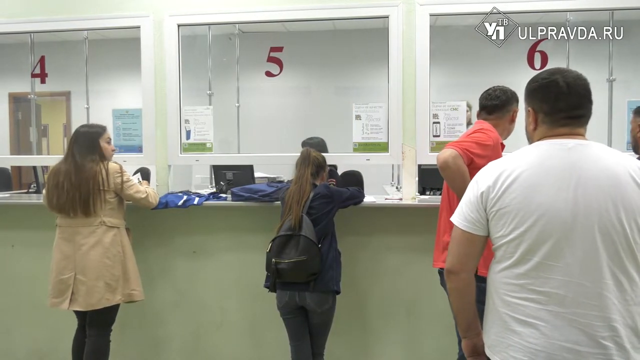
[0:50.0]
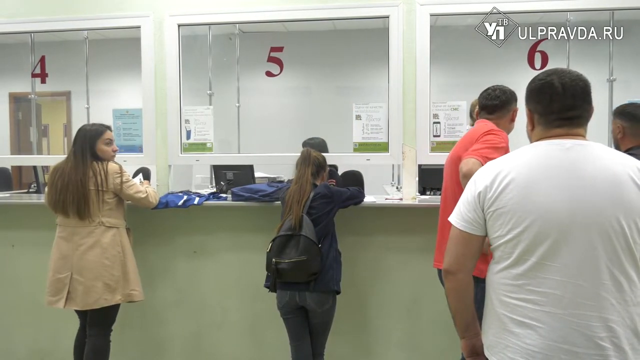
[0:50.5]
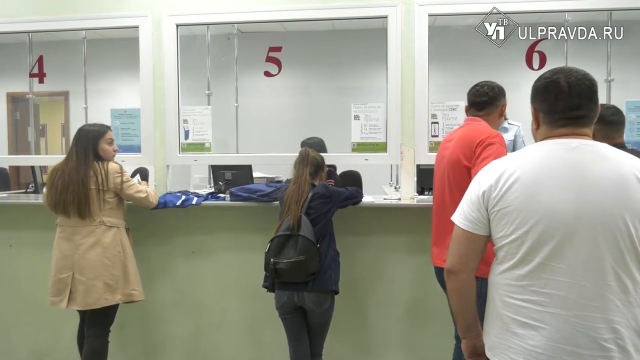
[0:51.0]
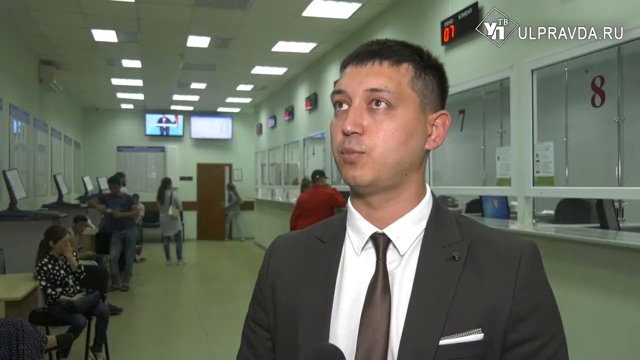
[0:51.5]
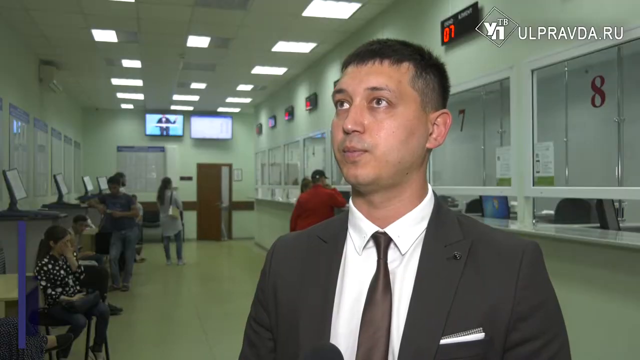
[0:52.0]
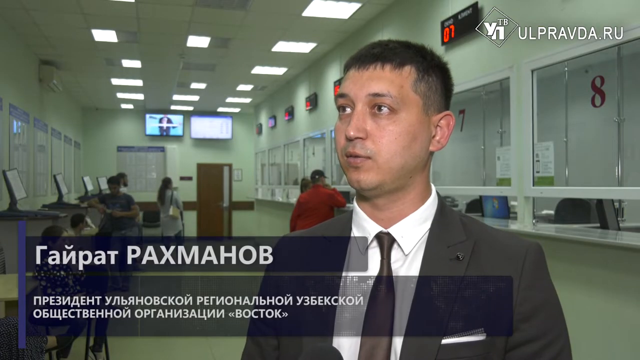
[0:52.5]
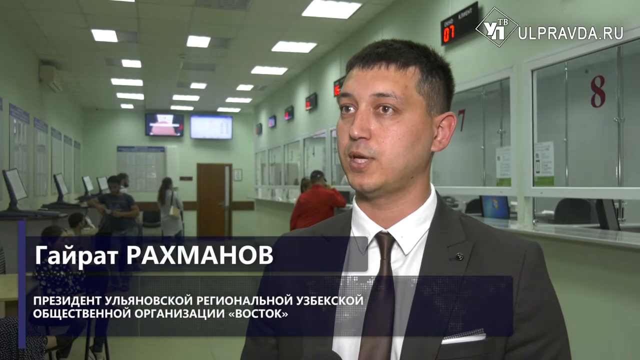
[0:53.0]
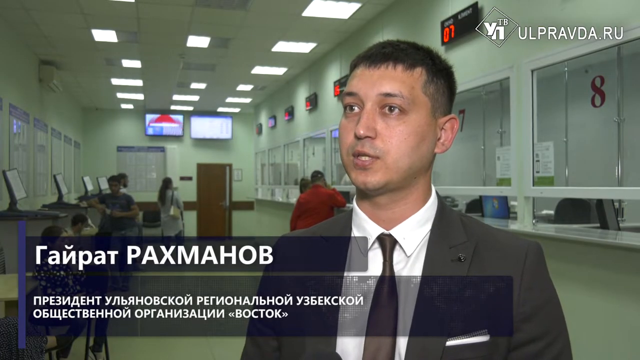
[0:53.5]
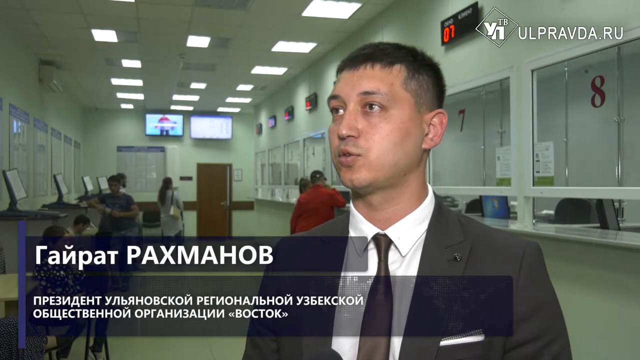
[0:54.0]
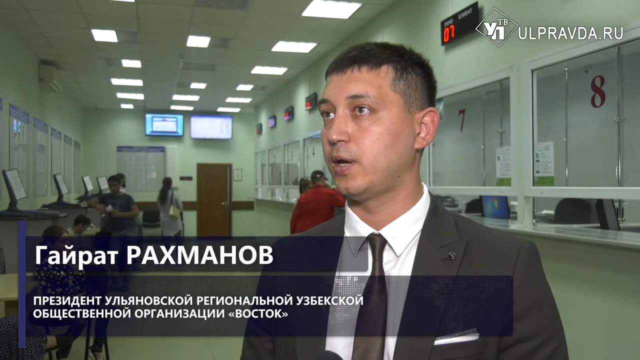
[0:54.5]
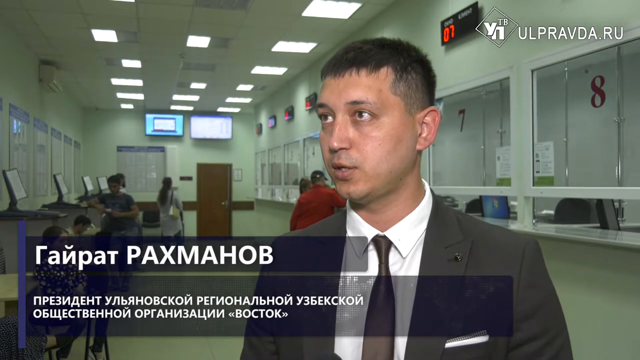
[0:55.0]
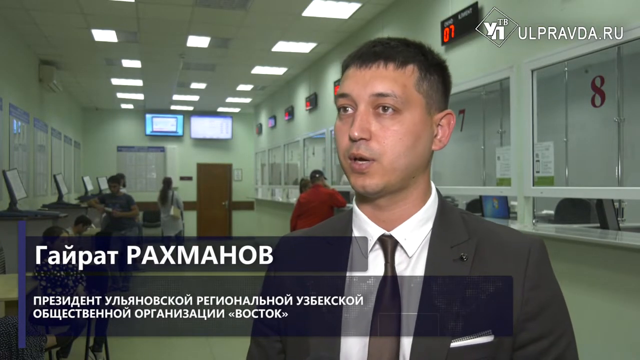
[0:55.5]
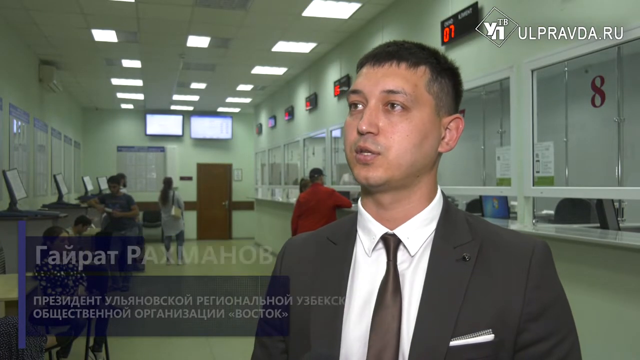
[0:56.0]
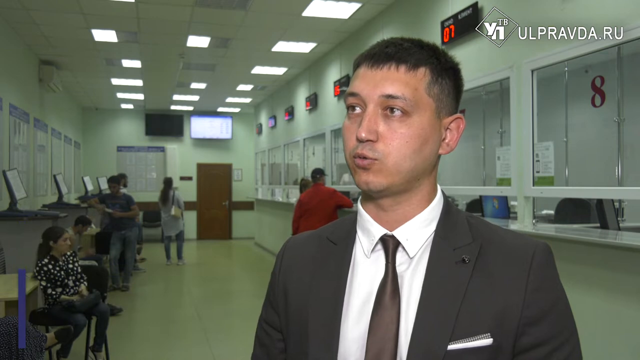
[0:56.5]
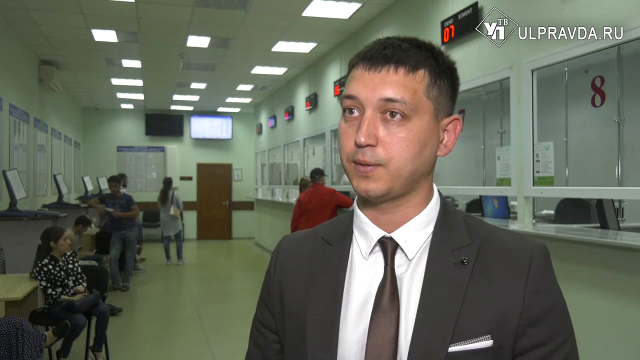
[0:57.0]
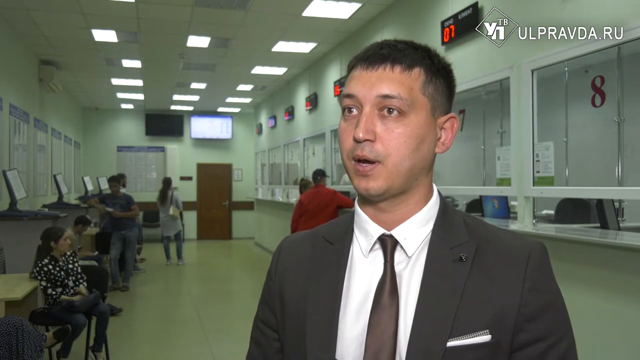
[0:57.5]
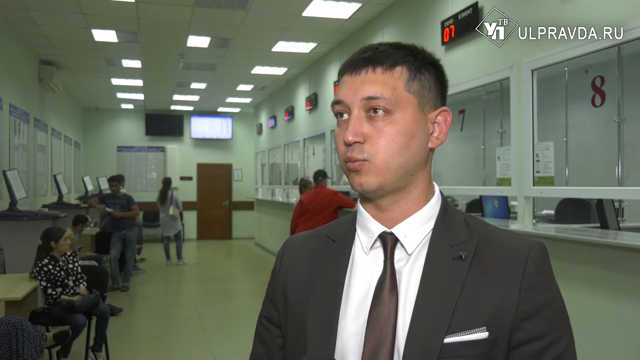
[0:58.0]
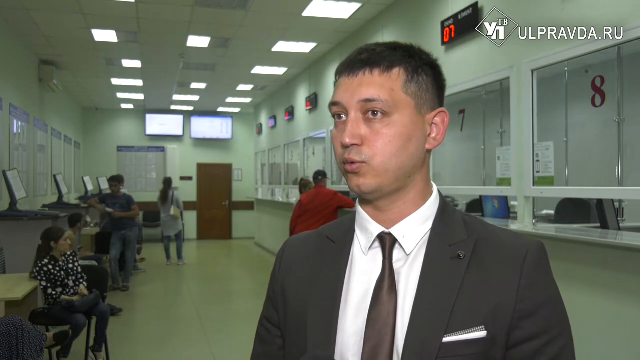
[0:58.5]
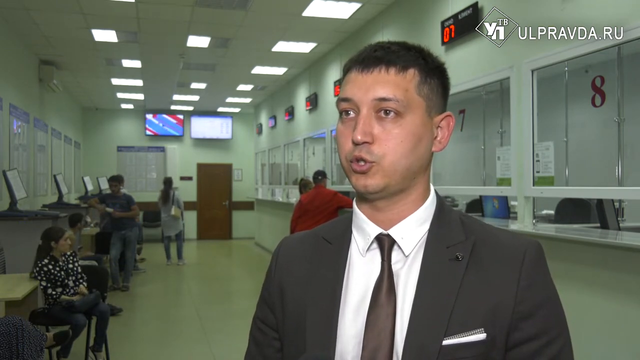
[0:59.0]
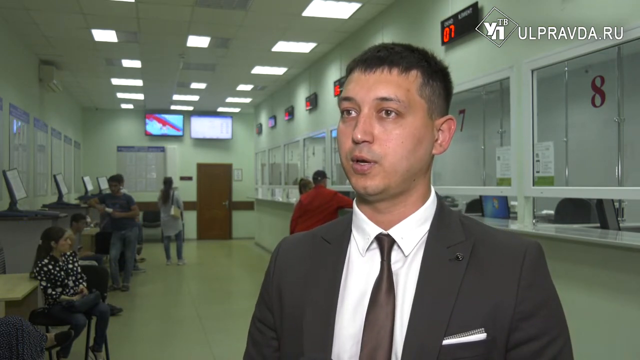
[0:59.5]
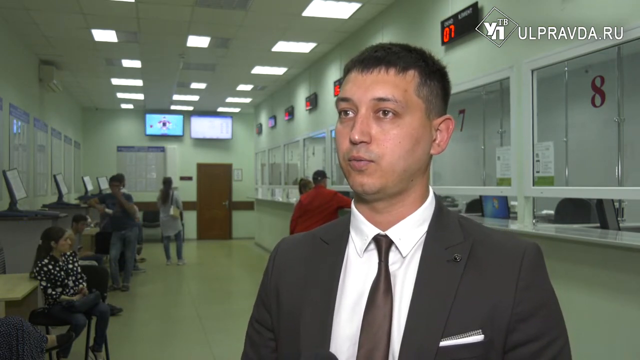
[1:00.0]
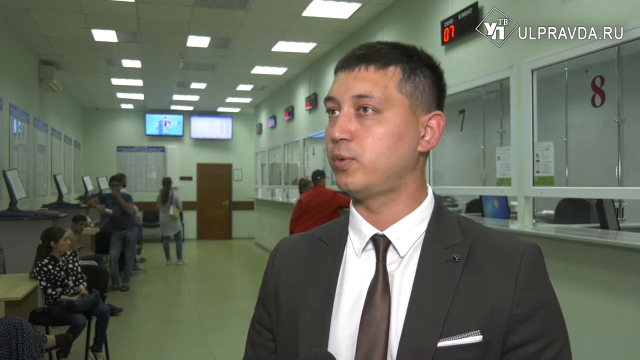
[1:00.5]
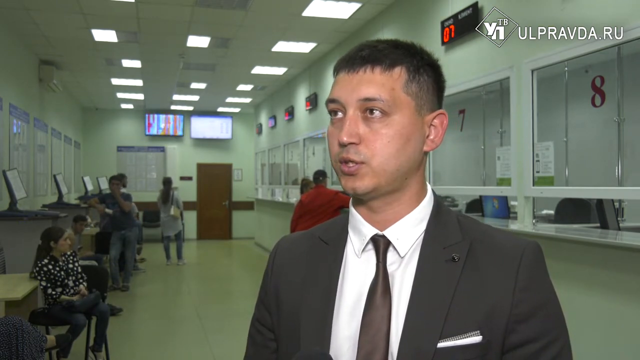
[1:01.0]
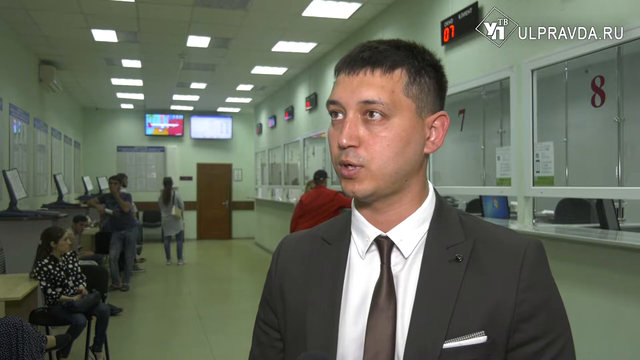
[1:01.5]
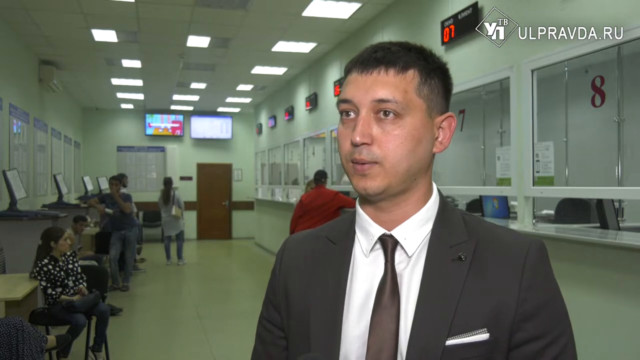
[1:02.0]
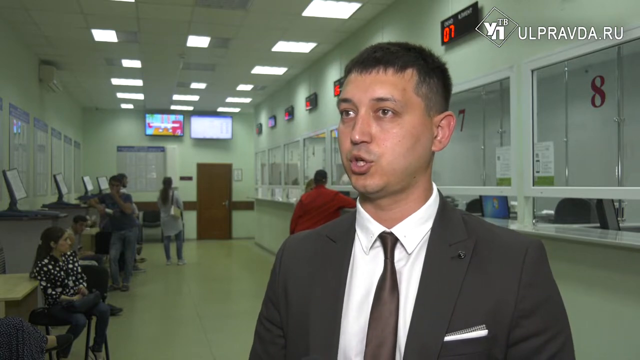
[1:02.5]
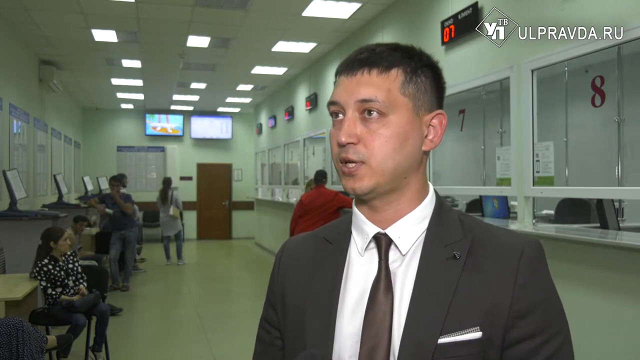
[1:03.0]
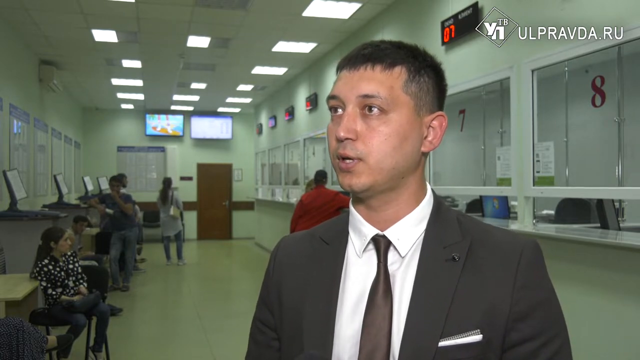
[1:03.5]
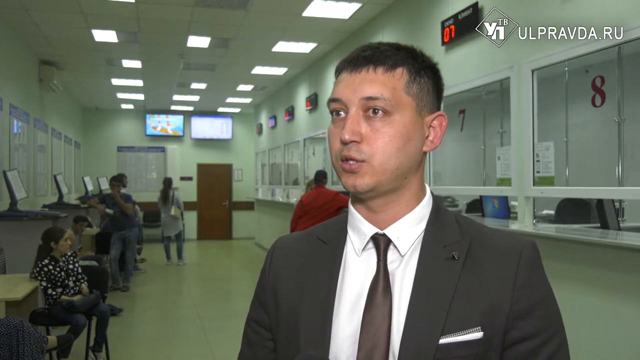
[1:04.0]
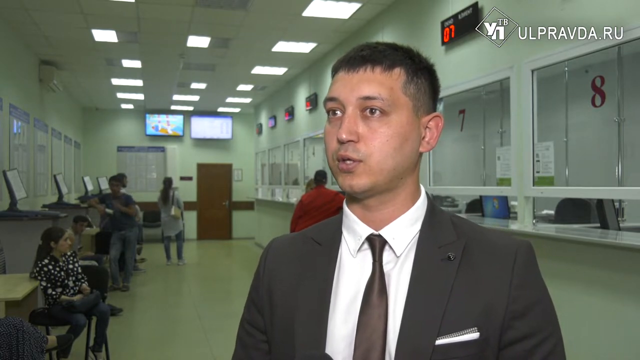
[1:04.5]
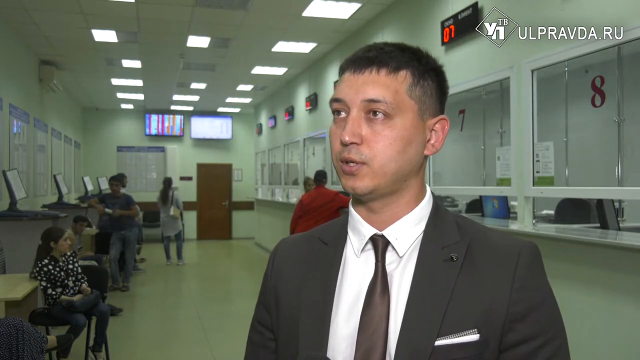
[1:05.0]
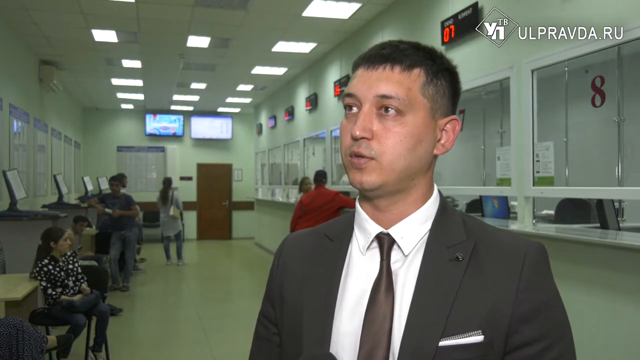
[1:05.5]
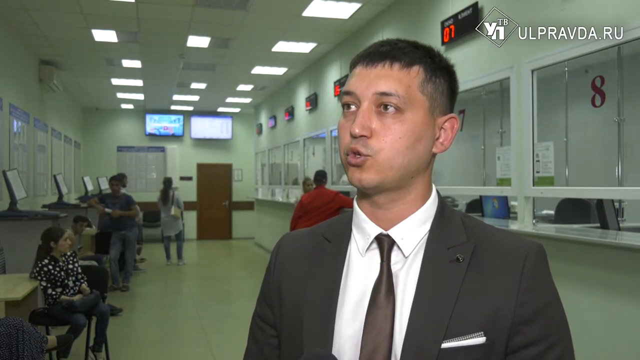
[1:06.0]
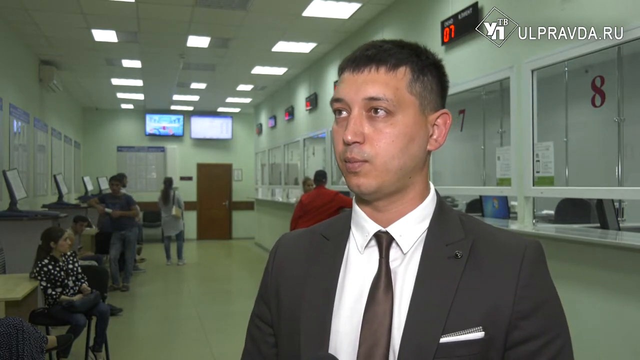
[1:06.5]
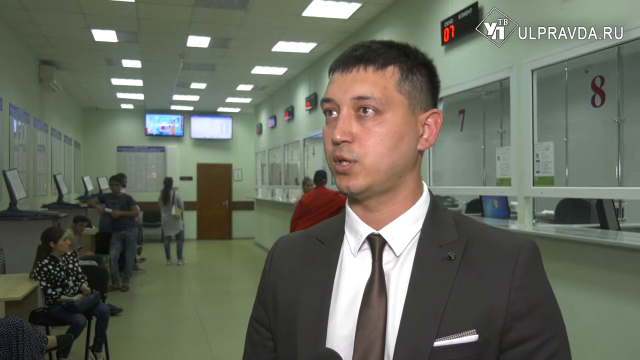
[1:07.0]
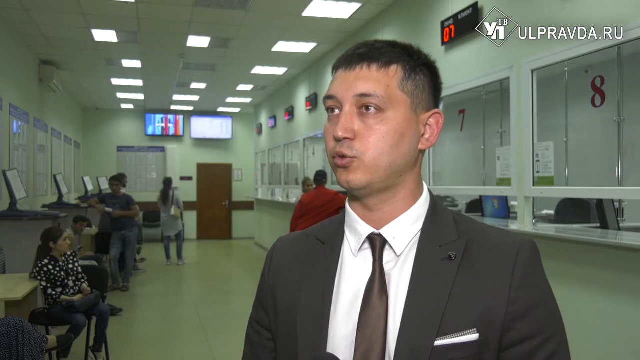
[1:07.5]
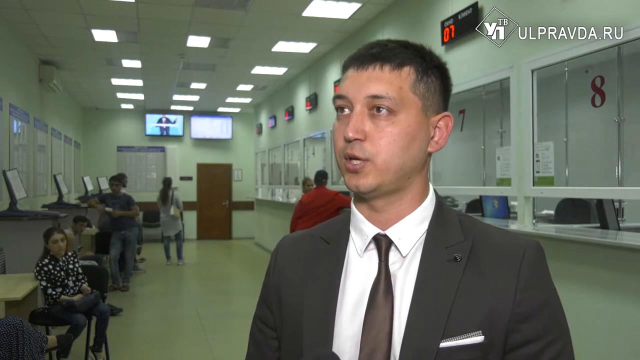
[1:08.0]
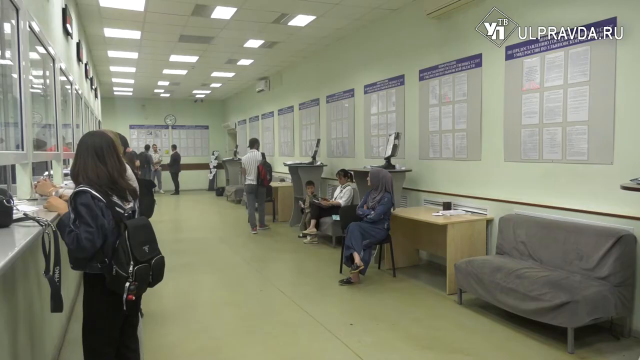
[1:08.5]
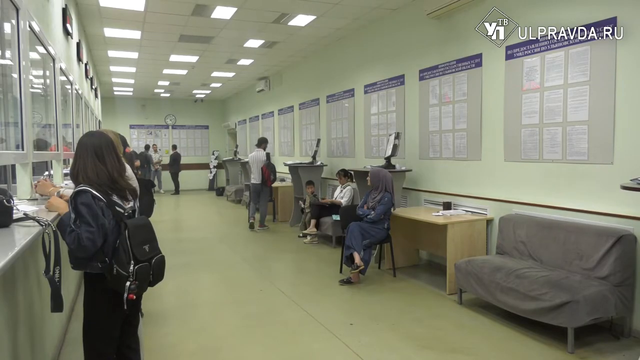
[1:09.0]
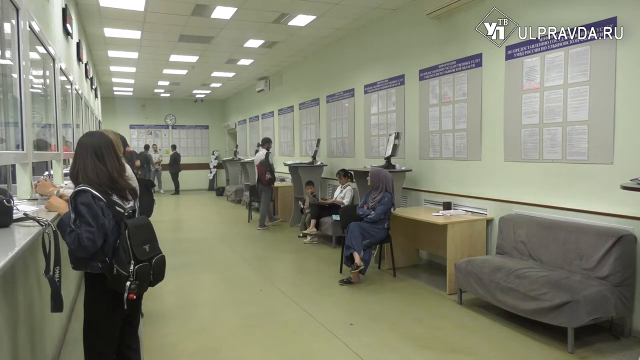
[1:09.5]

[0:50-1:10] Caucasian men and women are inside a building with a row of screen panels numbered one through eight. The people on the other side of the panels process their information. Many of the people wait patiently, standing in front of the workers behind a computer desk, who appear very focused on the task. Text in the top right-hand portion of the screen apparently indicates the footage comes from a Russian government website.